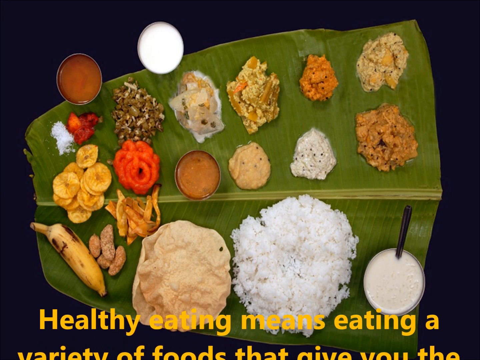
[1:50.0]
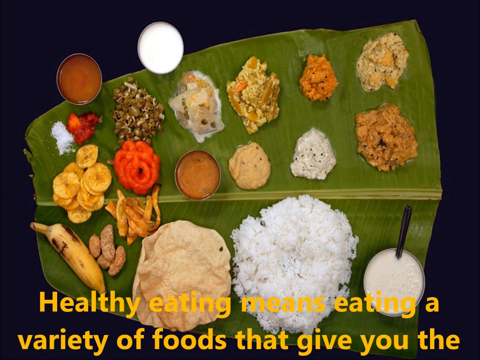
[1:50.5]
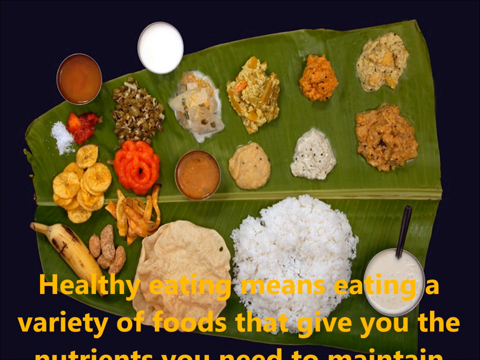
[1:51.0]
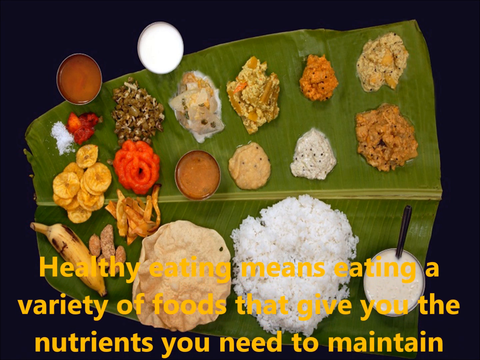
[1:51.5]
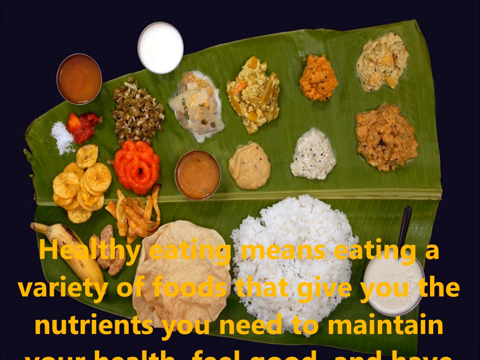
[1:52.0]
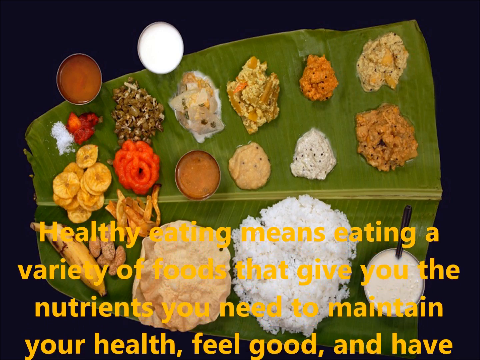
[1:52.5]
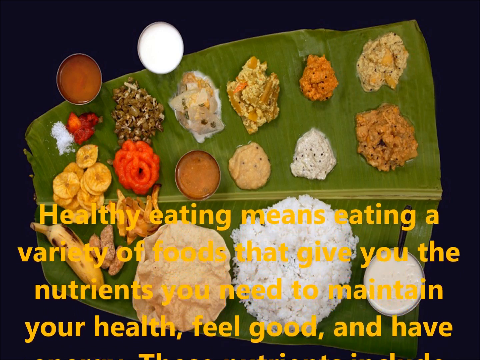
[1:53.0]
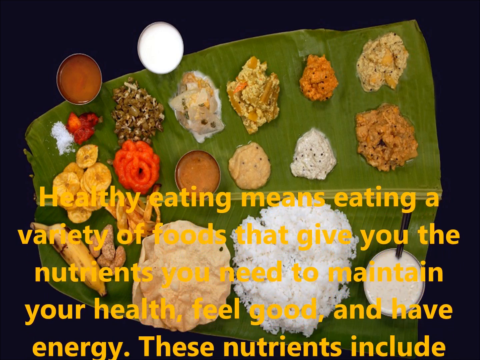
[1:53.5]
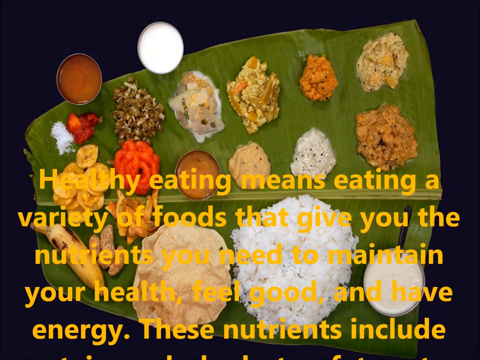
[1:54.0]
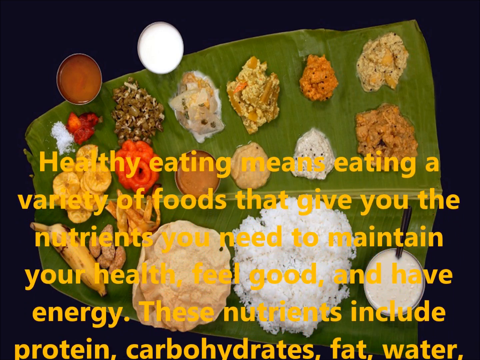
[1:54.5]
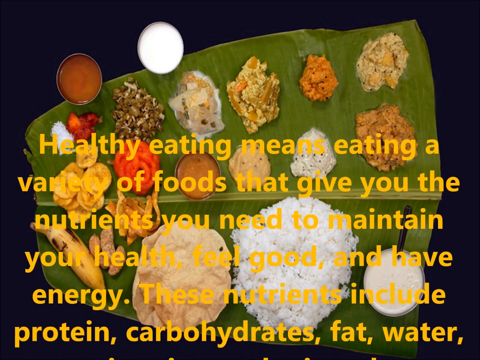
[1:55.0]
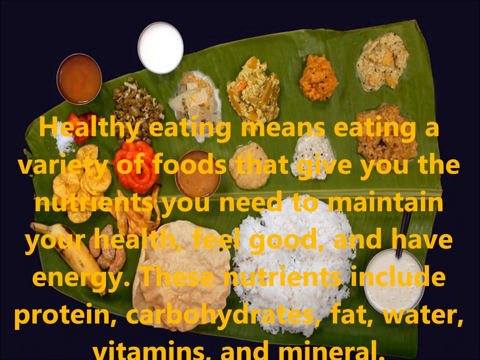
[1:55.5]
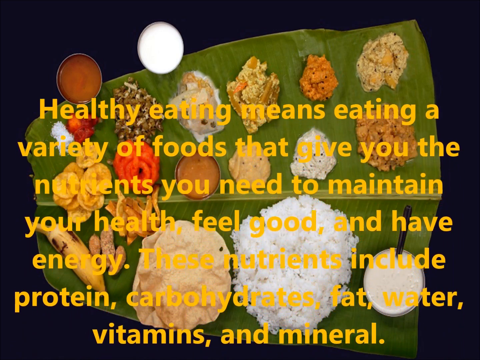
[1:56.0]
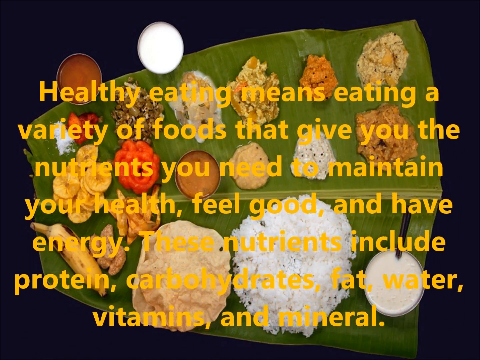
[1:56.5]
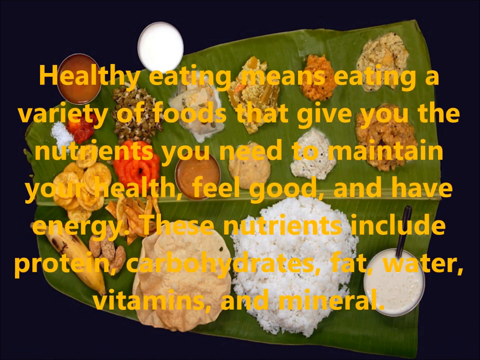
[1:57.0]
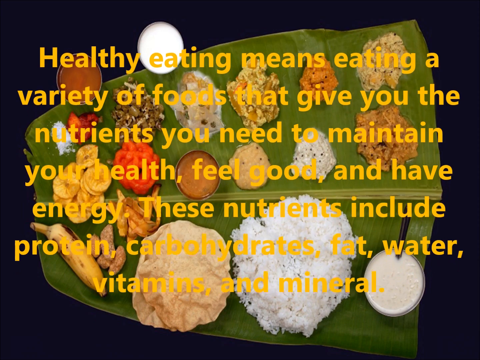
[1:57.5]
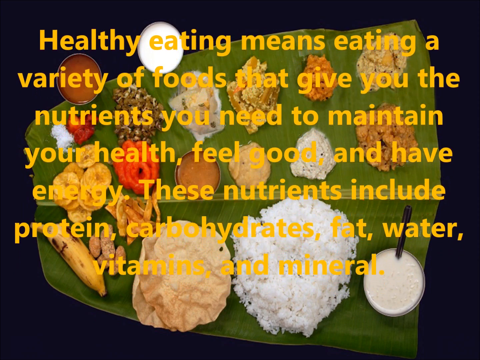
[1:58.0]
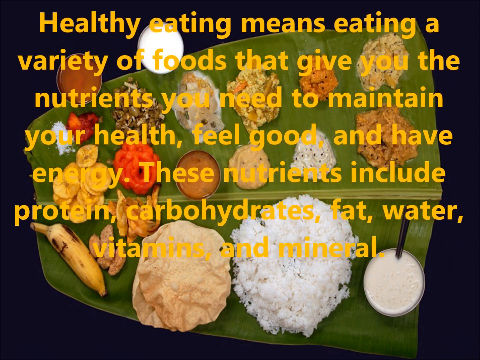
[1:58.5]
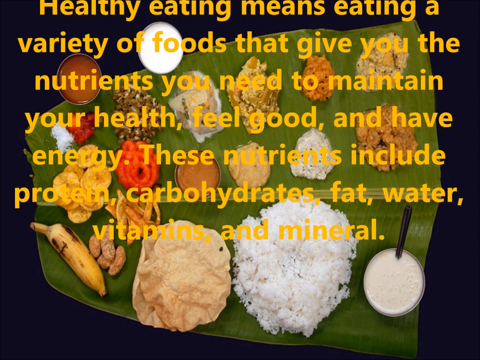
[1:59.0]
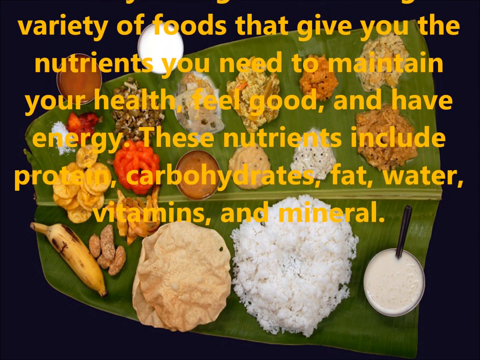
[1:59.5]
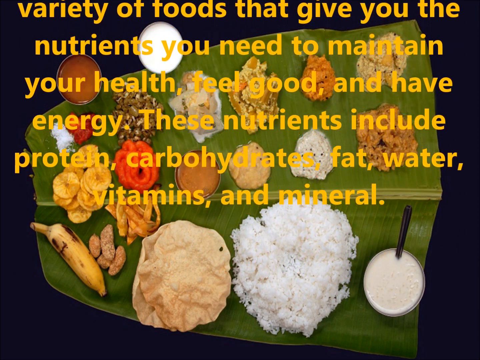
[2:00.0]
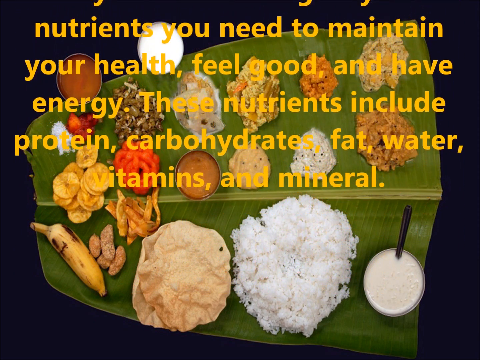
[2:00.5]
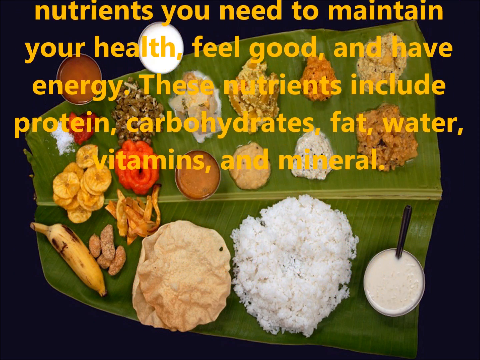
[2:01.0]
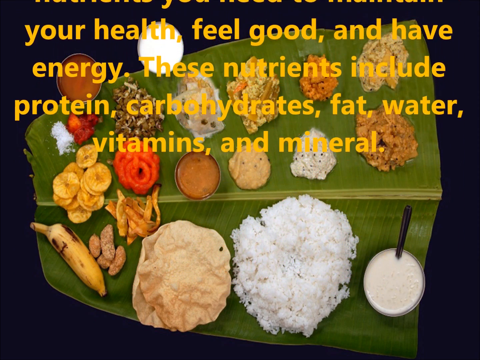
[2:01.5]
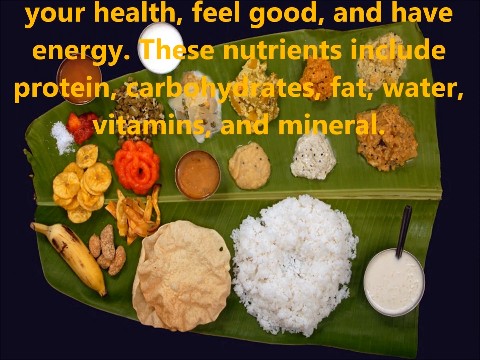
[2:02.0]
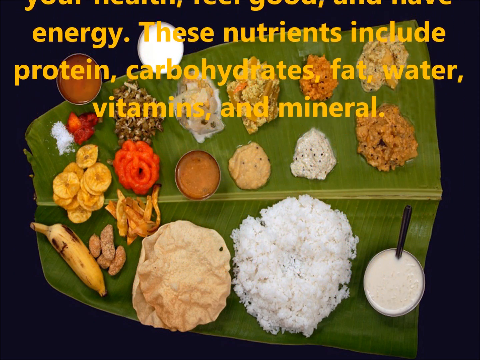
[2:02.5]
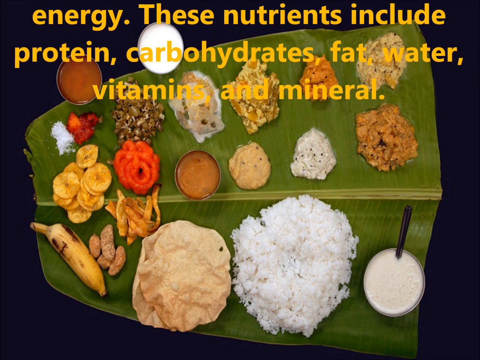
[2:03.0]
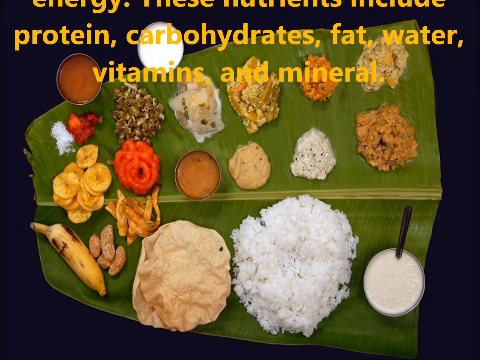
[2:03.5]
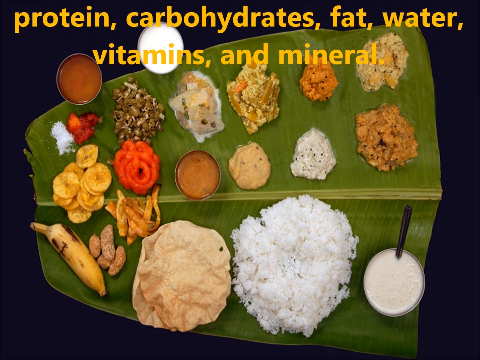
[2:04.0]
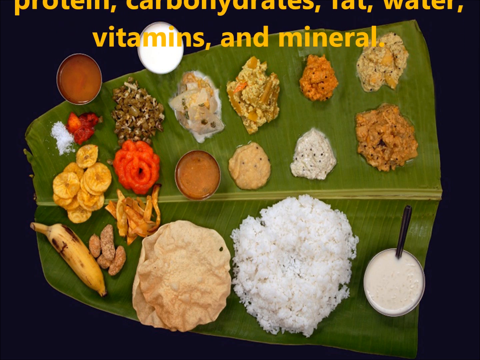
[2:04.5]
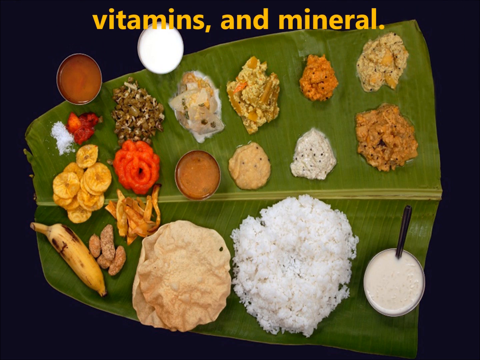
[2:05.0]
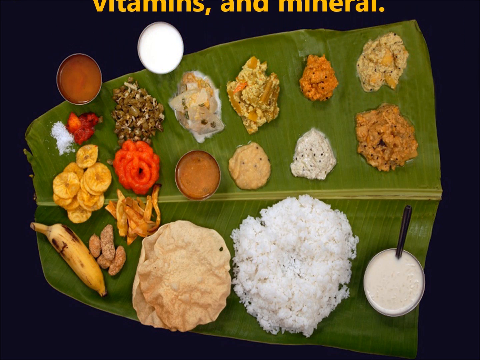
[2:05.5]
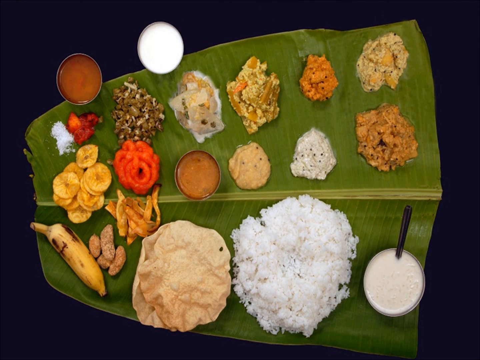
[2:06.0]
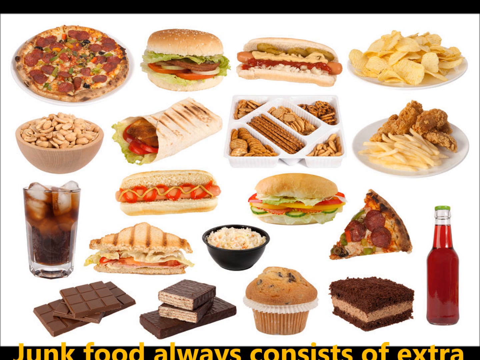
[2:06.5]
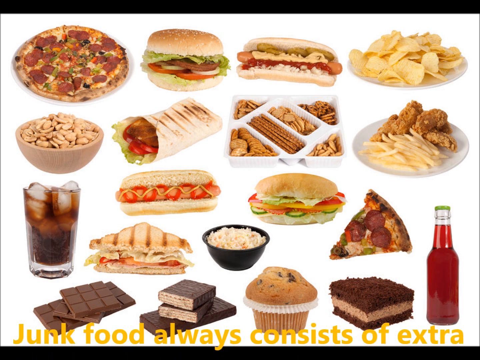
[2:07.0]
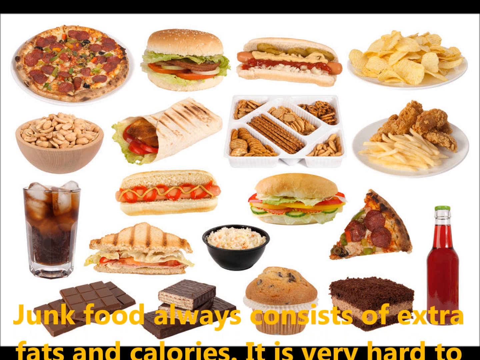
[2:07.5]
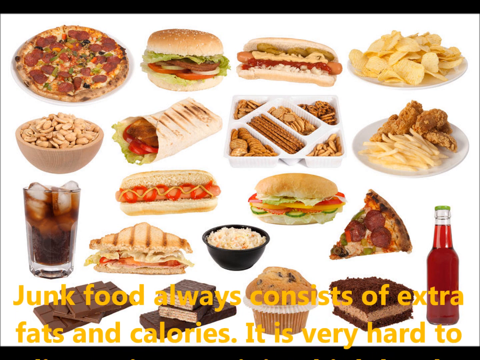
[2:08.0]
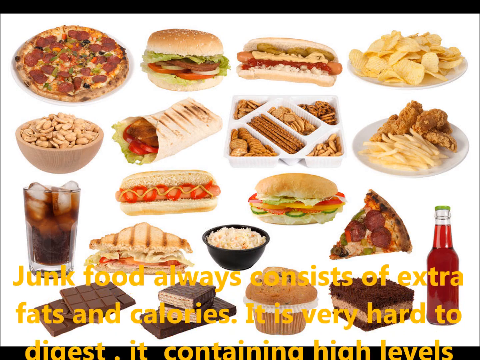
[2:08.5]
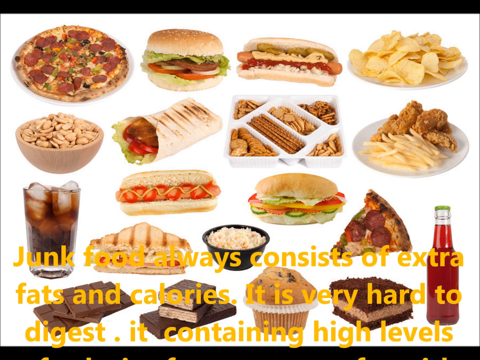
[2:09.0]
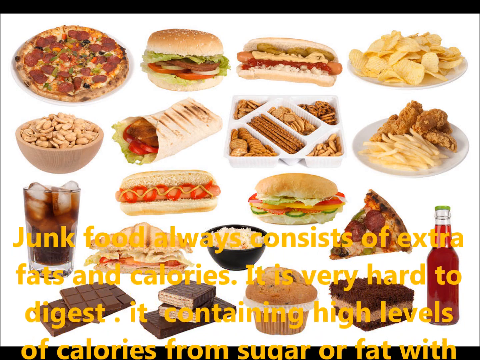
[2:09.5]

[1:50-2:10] Text talks about a variety of foods that give you nutrients so you can maintain your health and feel good, and about how they give you energy, carbohydrates, vitamins and minerals. In the background there are a bunch of different fruits, including something kind of like a banana and maybe rice, plus something green, maybe a leaf, that is unidentified. The video then transitions to another page full of food that looks like a bunch of junk food; the text starts talking about junk food and then cuts off.